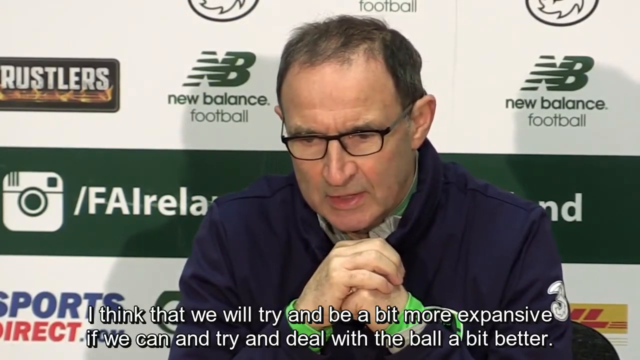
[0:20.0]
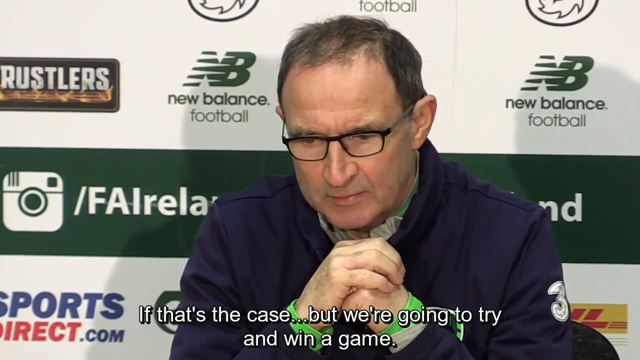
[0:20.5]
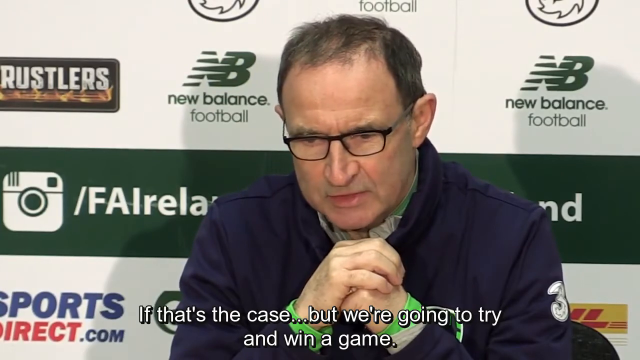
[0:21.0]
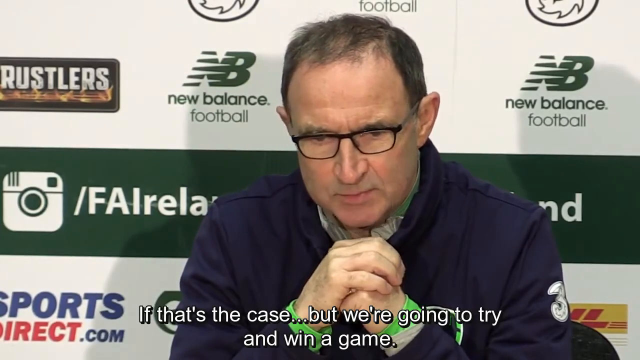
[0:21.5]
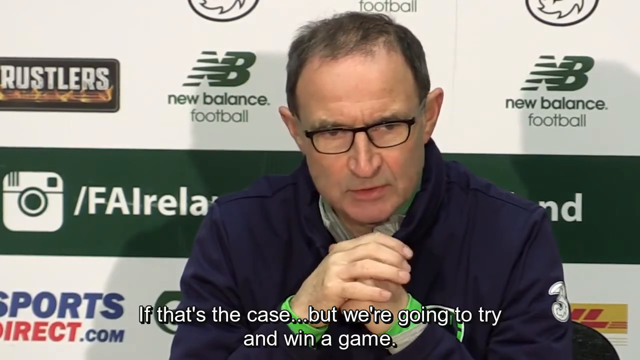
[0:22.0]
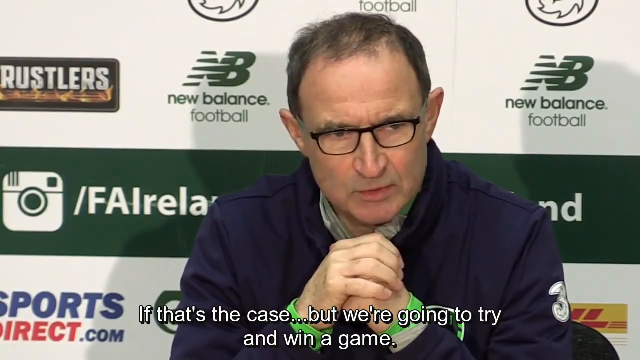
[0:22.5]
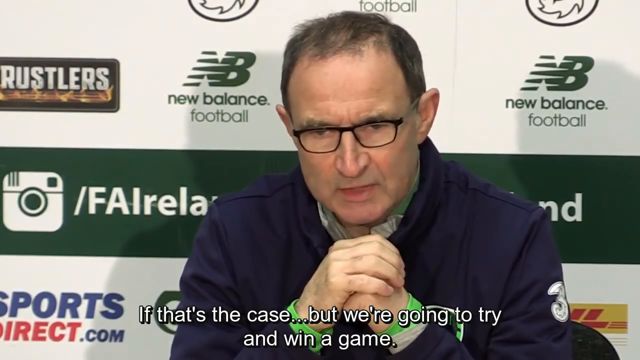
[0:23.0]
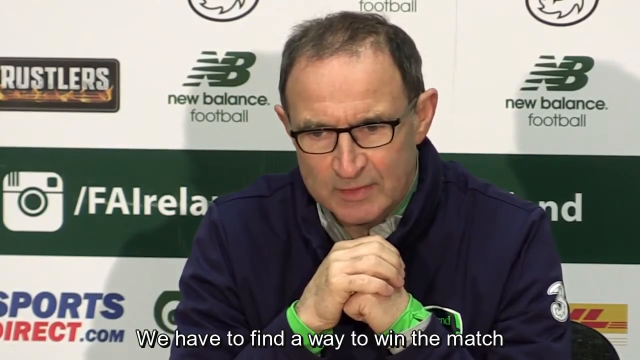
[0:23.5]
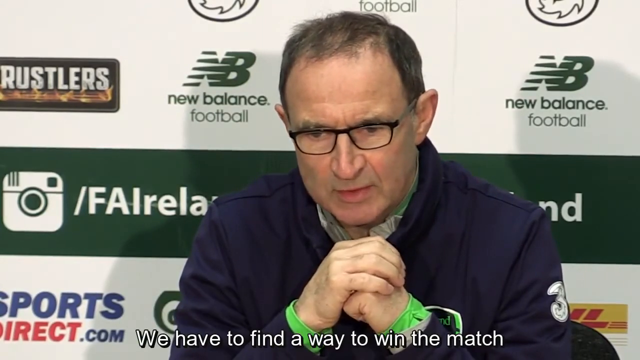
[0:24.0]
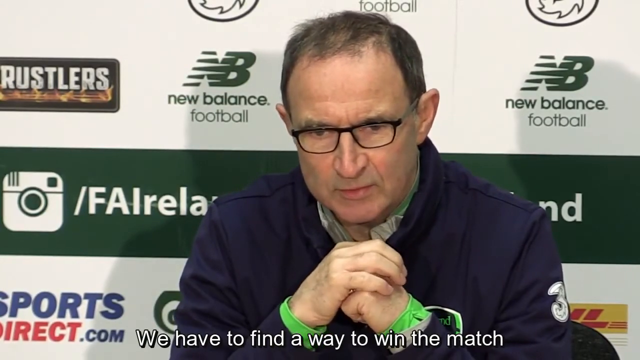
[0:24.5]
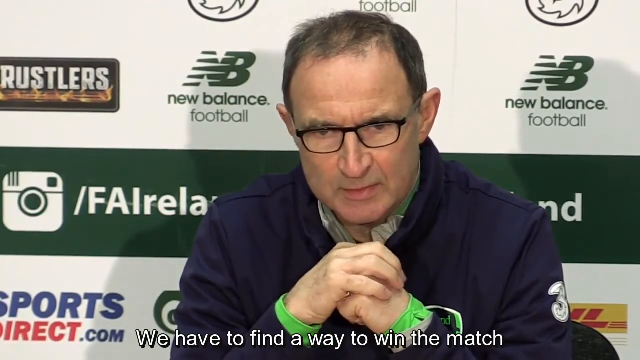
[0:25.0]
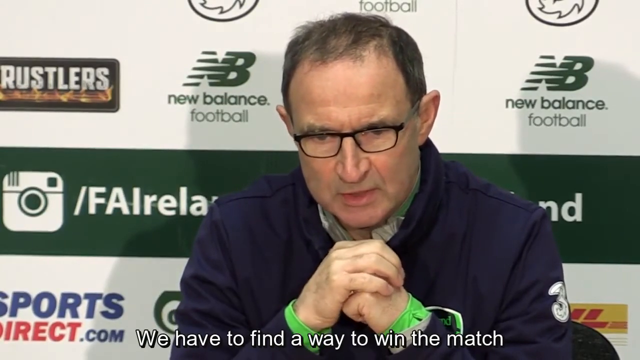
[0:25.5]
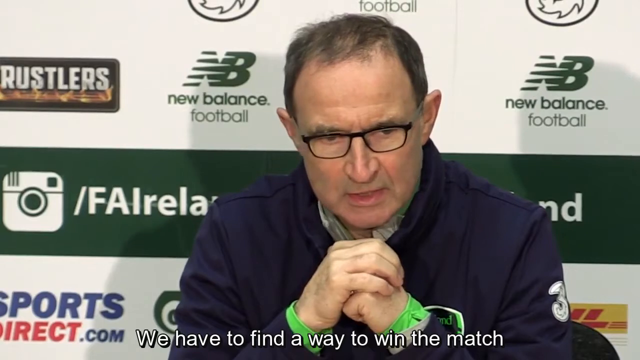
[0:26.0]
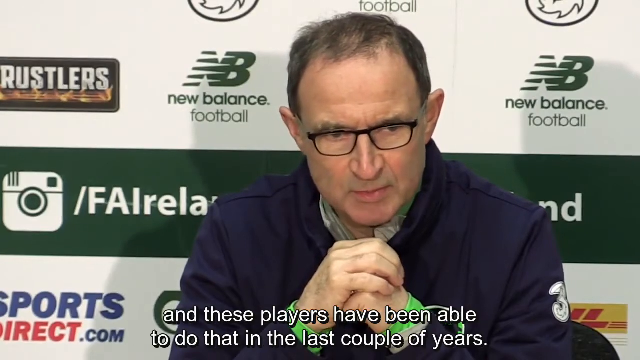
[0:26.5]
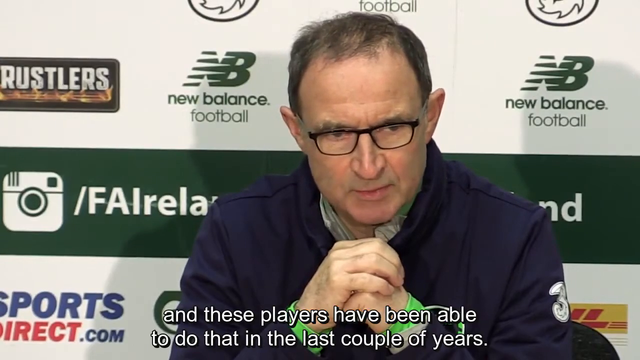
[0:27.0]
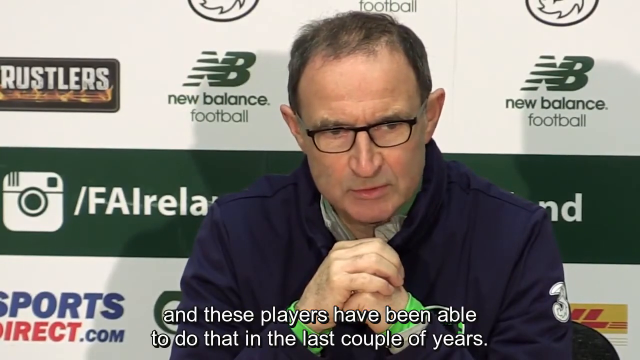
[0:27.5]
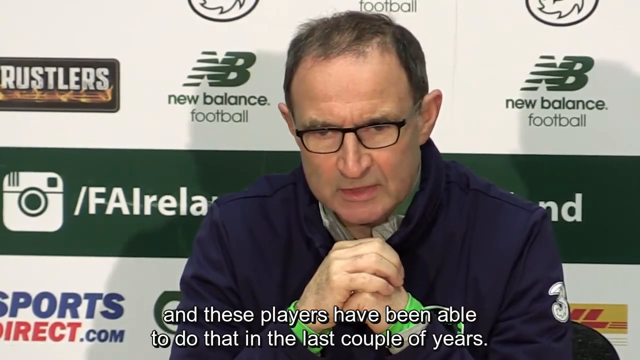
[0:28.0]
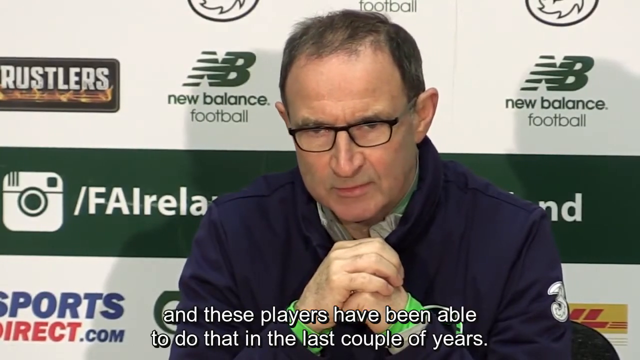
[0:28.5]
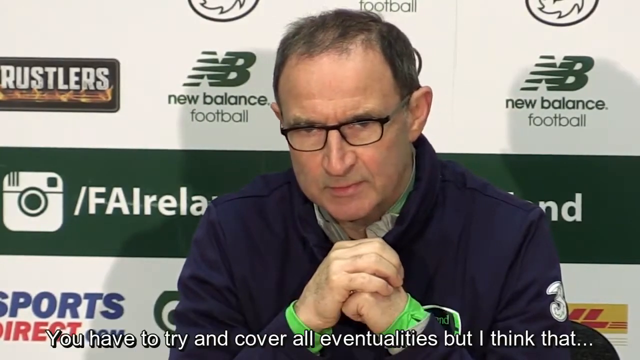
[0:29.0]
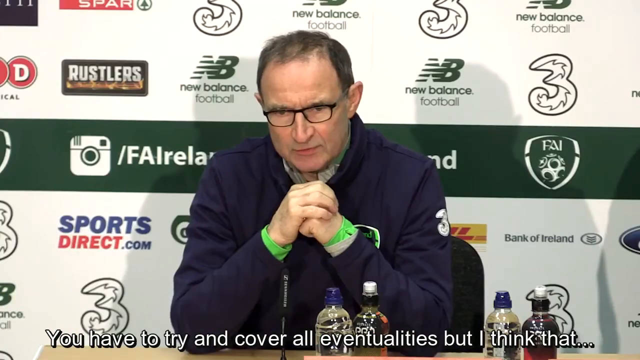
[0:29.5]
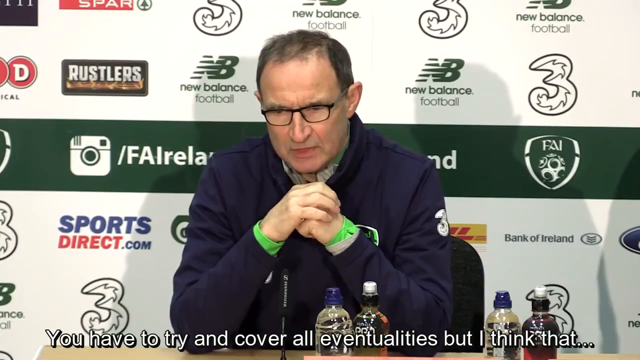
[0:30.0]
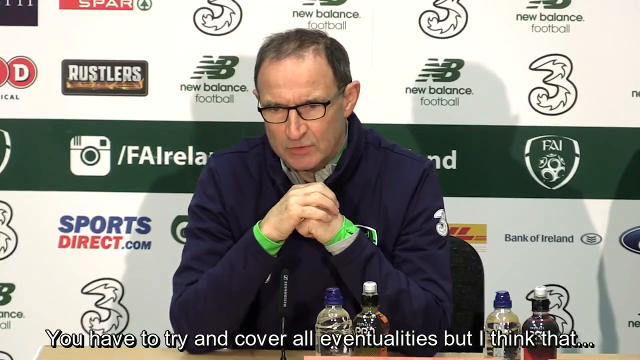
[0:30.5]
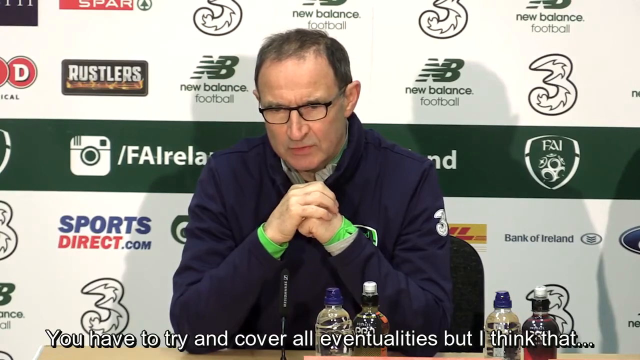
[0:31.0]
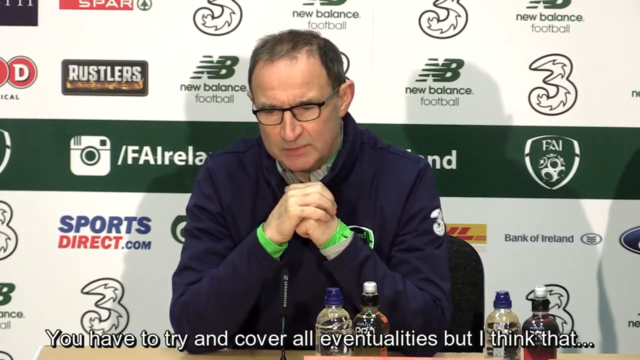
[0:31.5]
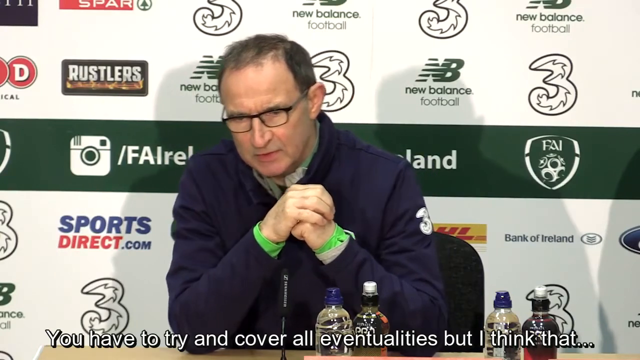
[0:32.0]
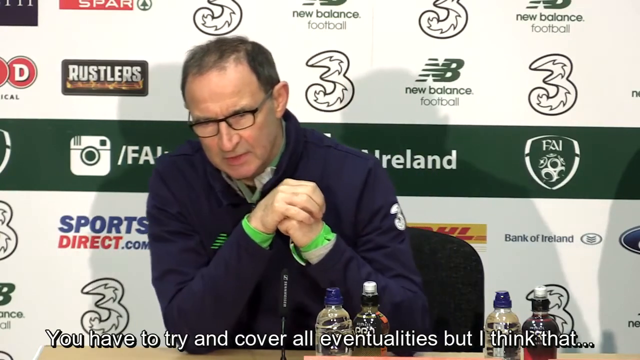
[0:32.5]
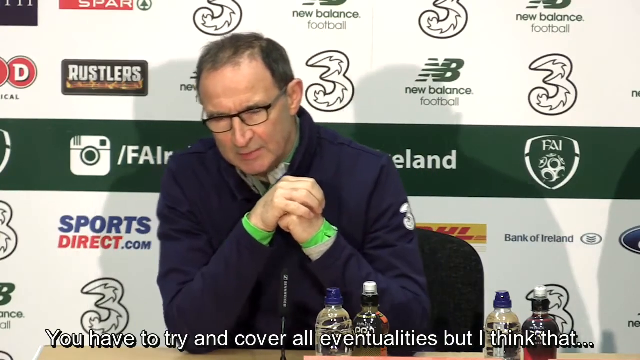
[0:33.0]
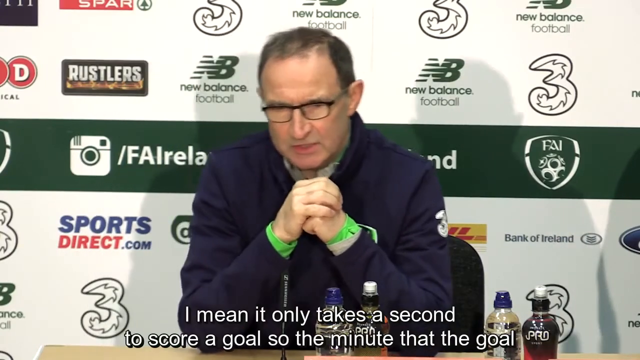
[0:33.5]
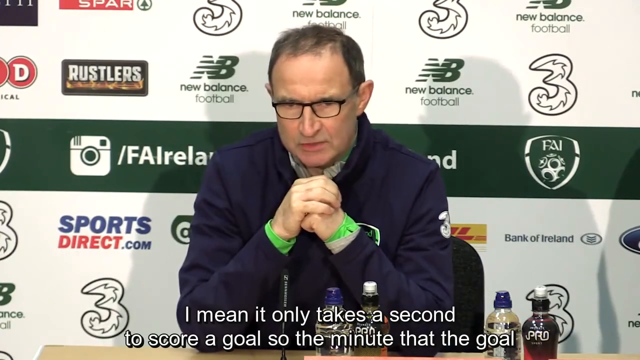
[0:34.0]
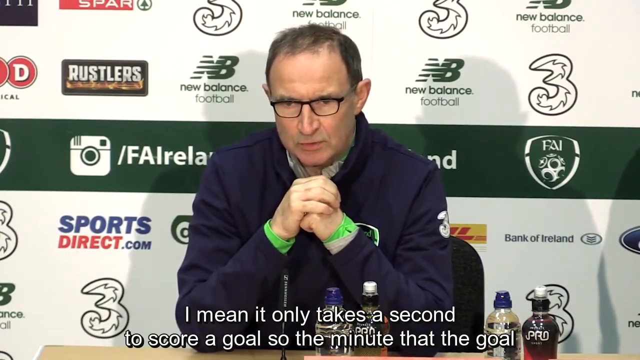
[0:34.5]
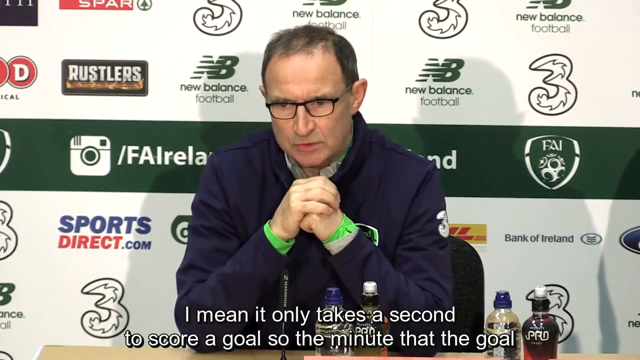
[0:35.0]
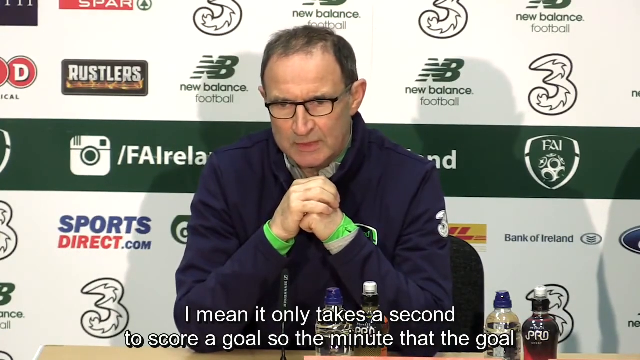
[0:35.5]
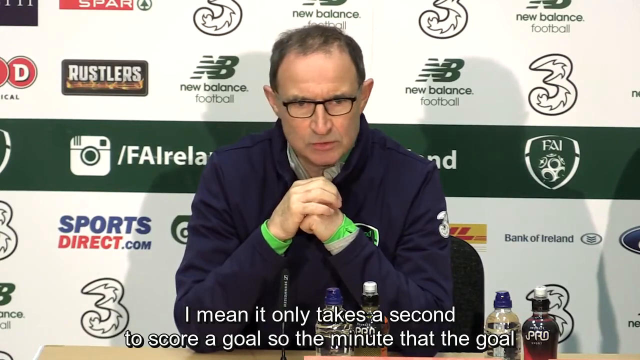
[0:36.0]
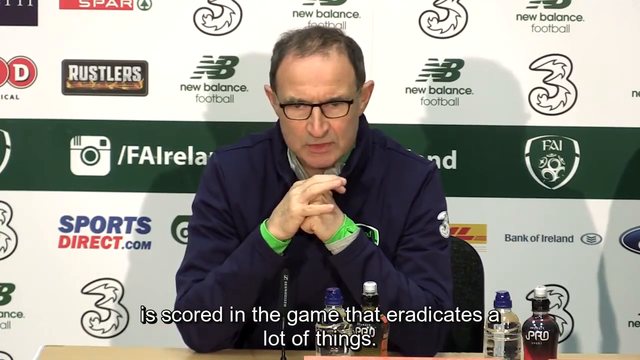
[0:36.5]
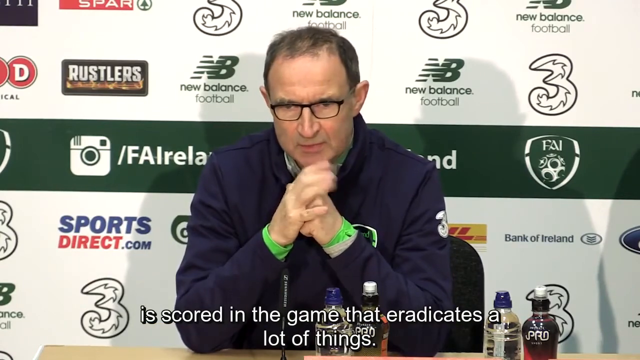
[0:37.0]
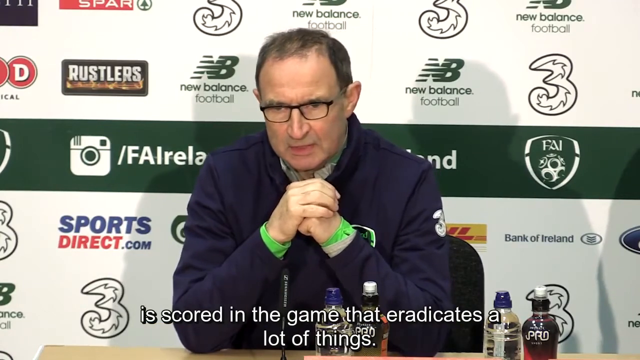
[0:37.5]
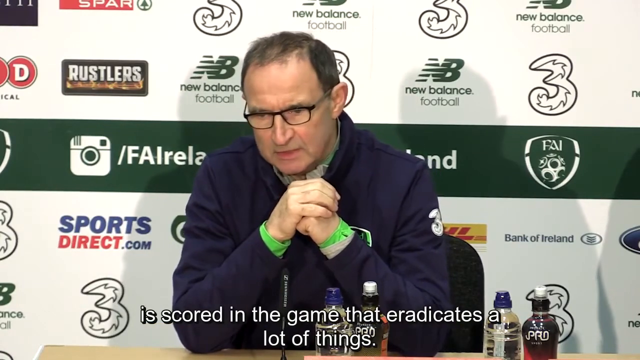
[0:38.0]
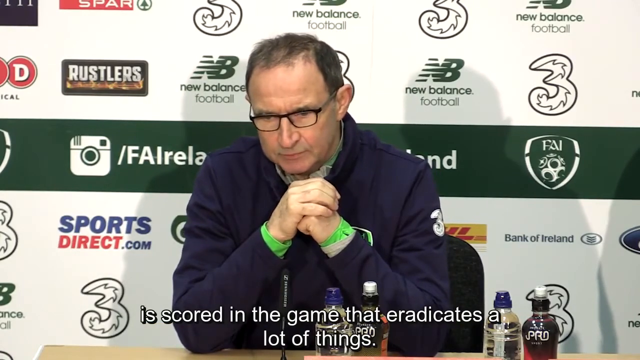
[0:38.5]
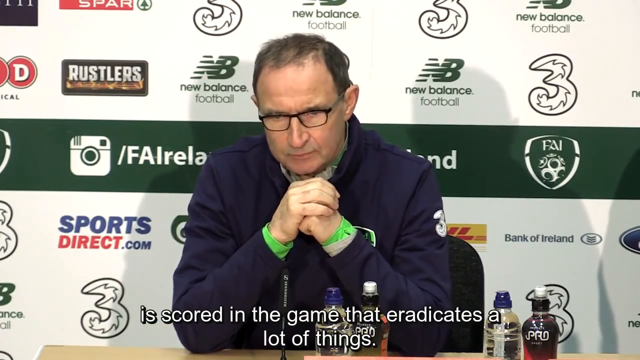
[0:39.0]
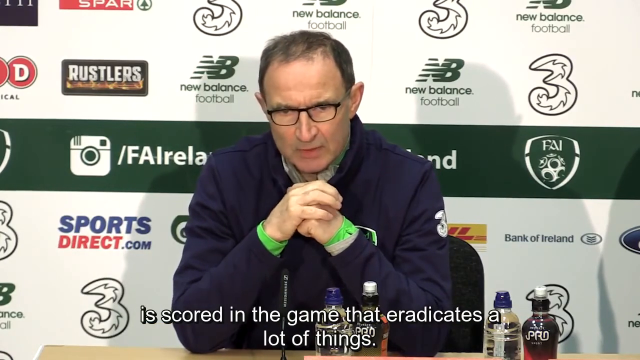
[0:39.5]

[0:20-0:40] The shot focuses on one man talking: he is white, with short black hair and no facial hair, wearing a blue shirt, with his hands pressed together. He looks around the crowd while he talks, mostly looking down. The camera pans out, revealing more of his body, four bottles on the table and a microphone in front of him, and his elbows resting on the table. Various advertisements are behind him, including SportsDirect.com, New Balance Football, Bank of Ireland and Rustlers. He says, "if that's the case, but we are going to try and win a game," and also that "we have to find a way to win the match, and these players have been able to do that in the last couple of years. You've got to try to cover all the eventualities, but I think that, I mean, it only takes a second to score."